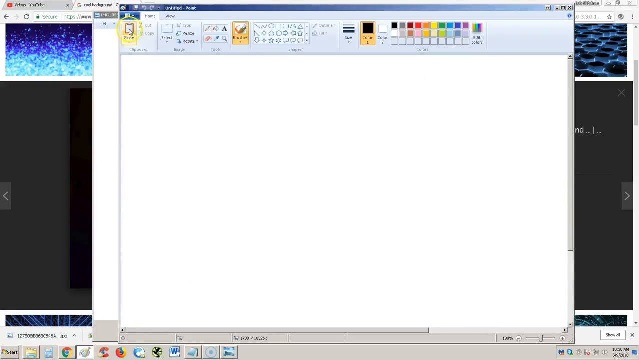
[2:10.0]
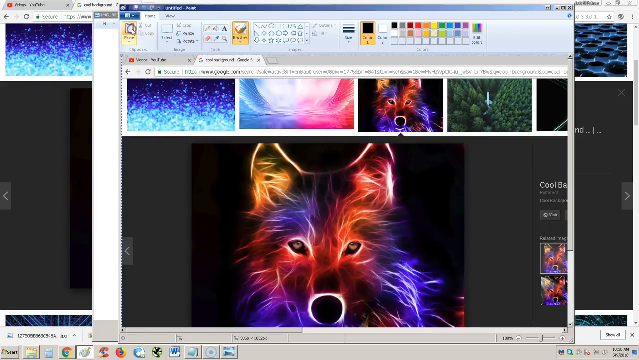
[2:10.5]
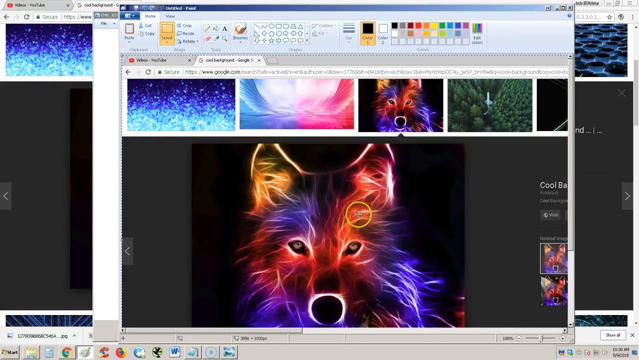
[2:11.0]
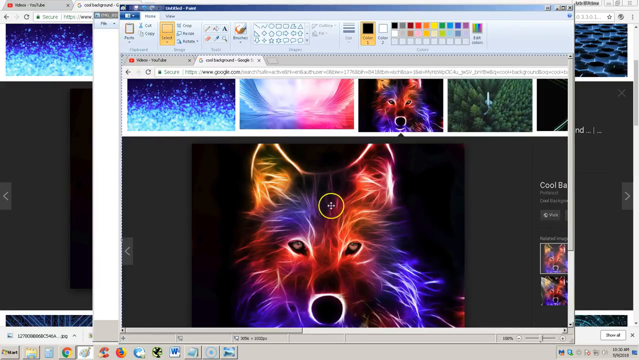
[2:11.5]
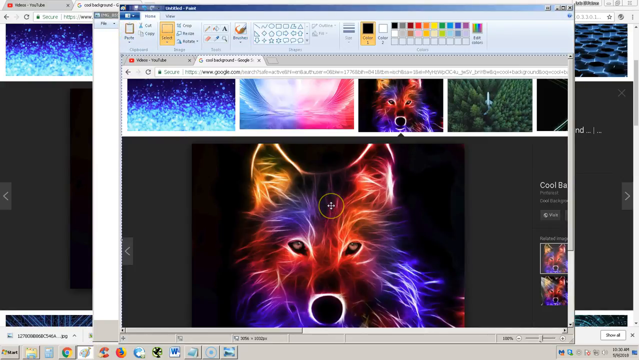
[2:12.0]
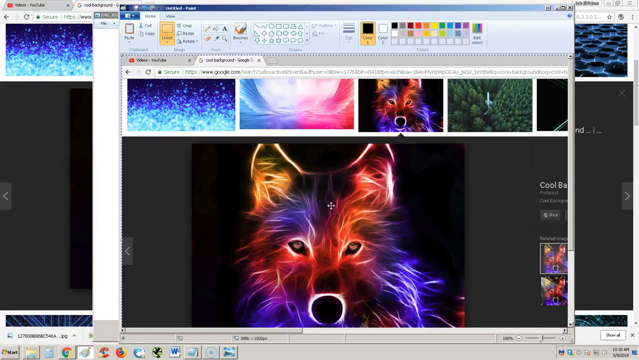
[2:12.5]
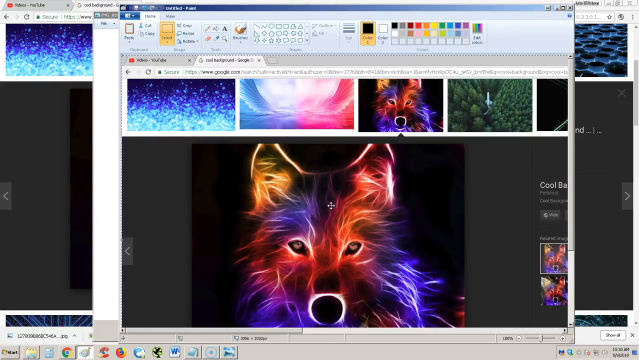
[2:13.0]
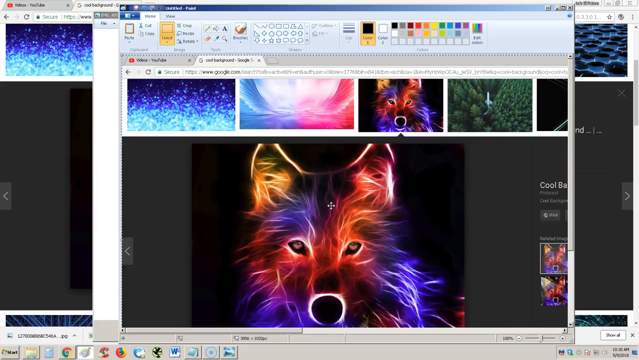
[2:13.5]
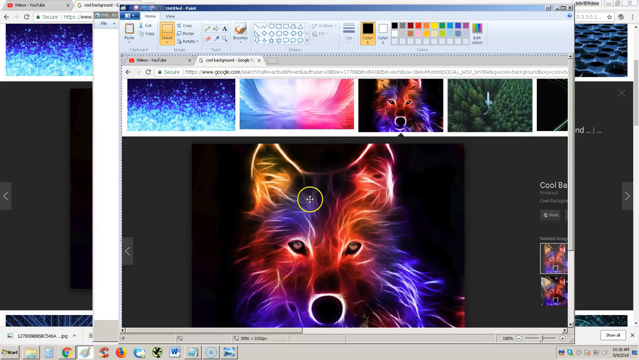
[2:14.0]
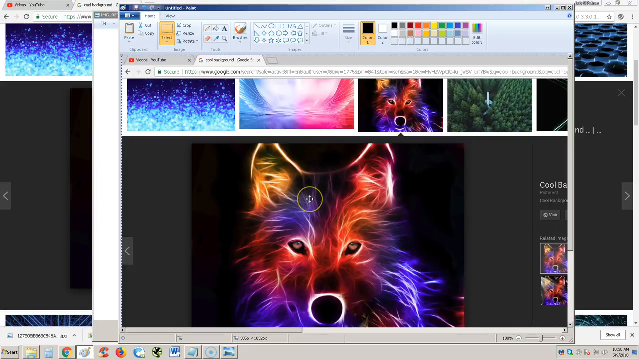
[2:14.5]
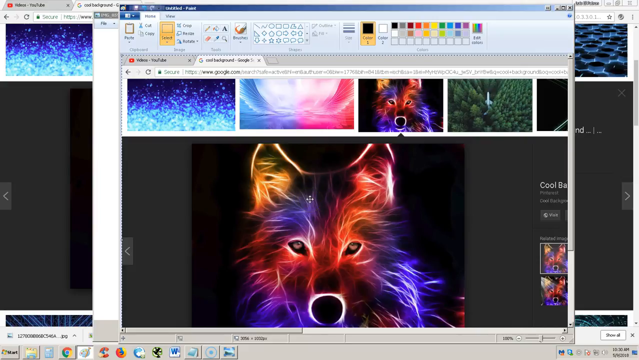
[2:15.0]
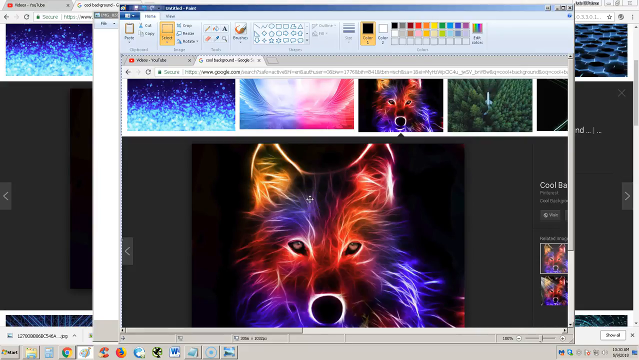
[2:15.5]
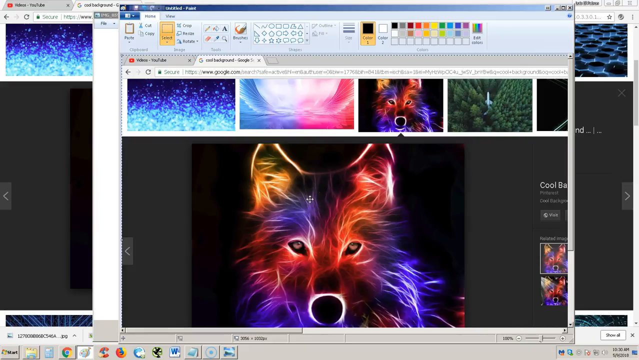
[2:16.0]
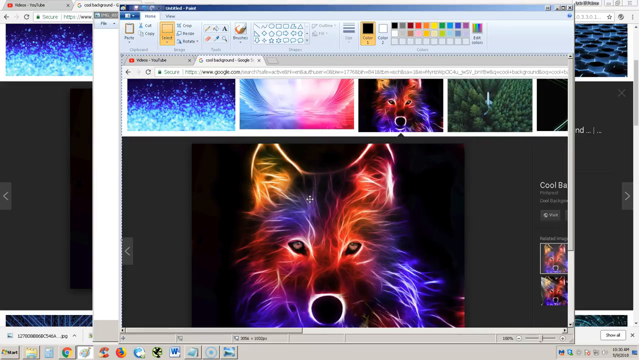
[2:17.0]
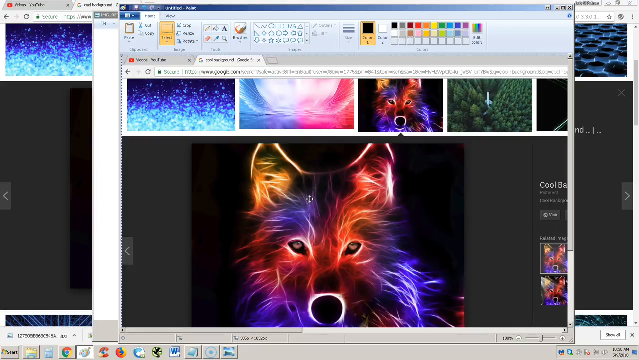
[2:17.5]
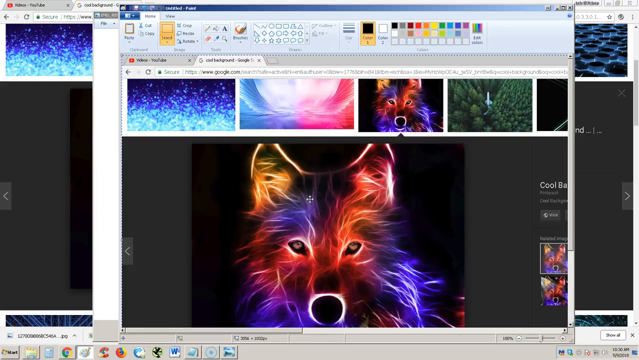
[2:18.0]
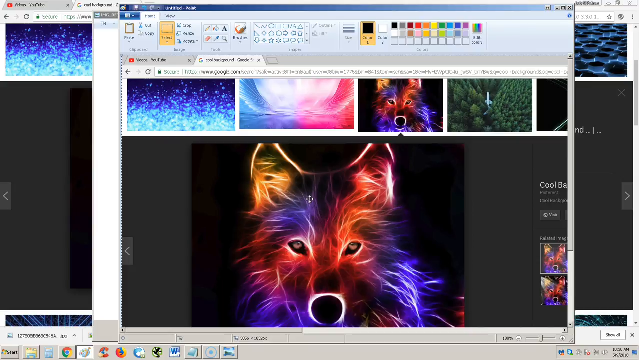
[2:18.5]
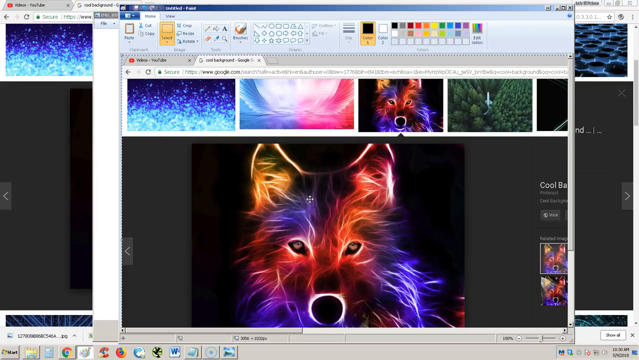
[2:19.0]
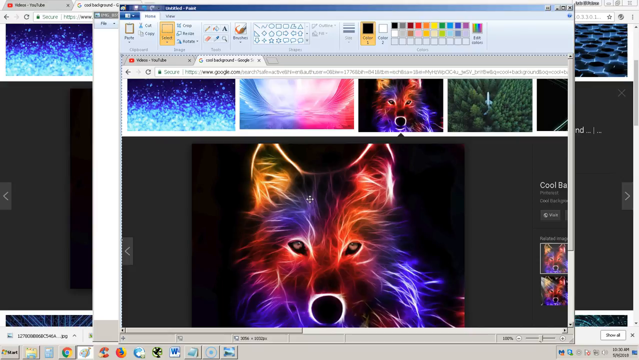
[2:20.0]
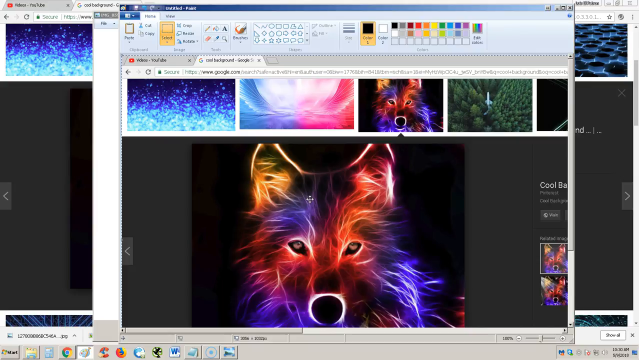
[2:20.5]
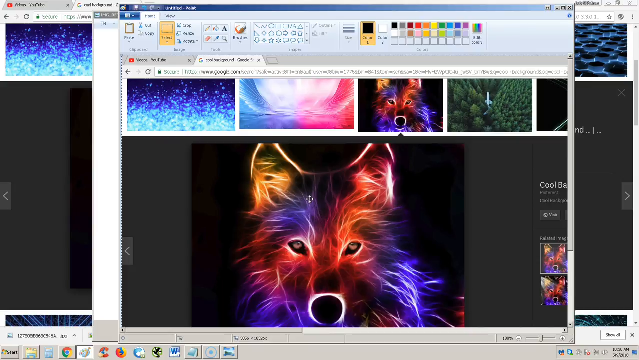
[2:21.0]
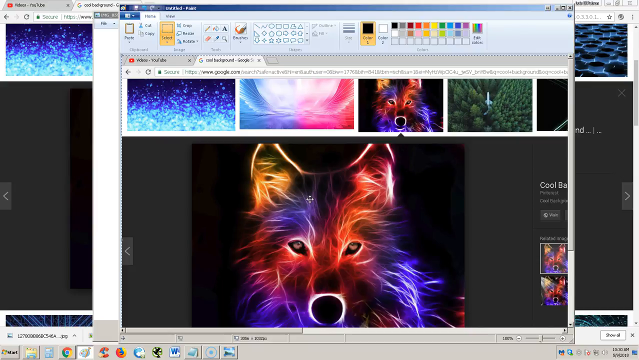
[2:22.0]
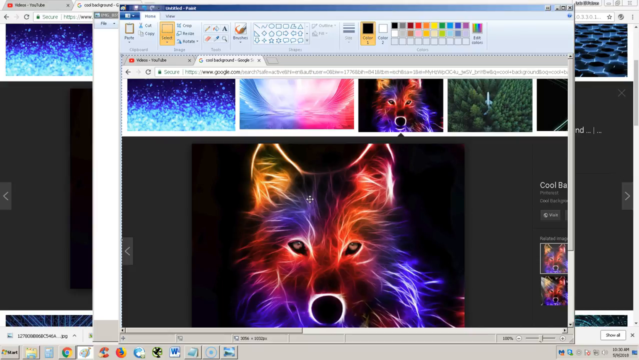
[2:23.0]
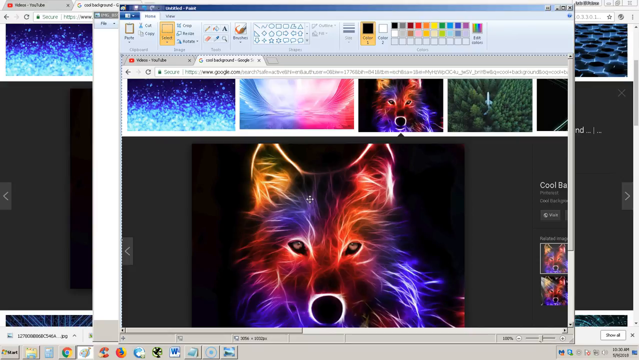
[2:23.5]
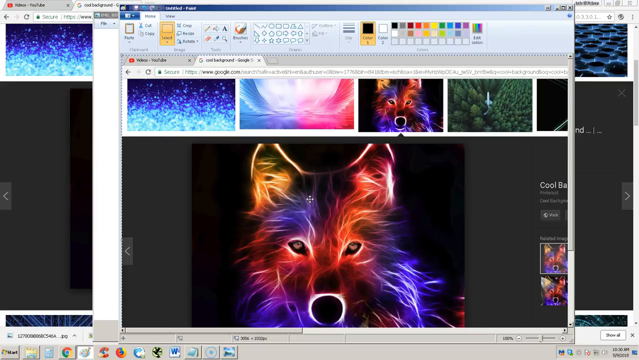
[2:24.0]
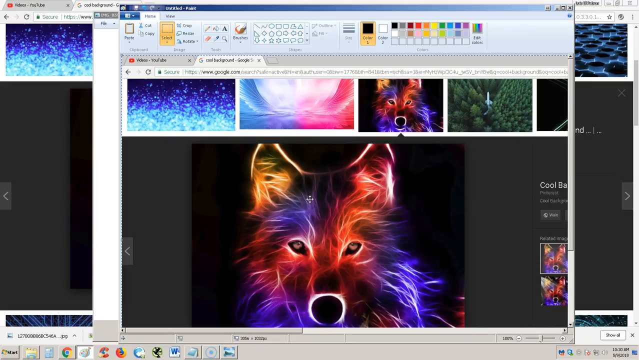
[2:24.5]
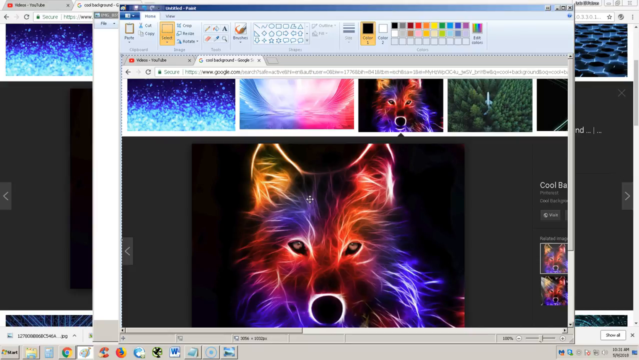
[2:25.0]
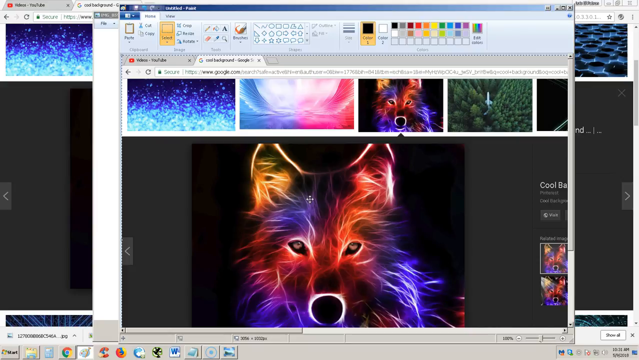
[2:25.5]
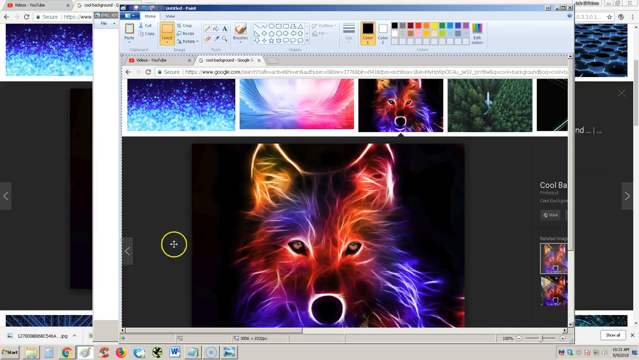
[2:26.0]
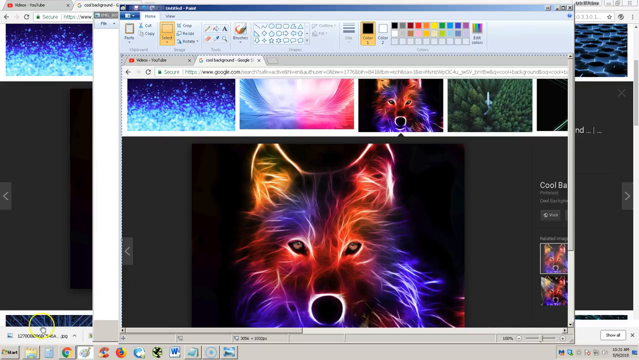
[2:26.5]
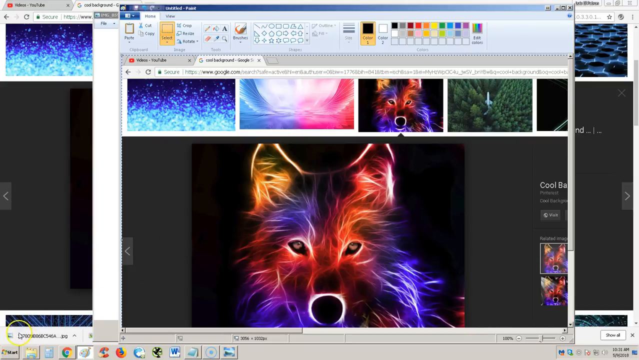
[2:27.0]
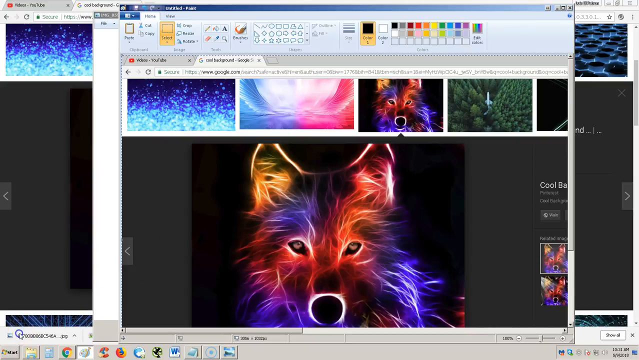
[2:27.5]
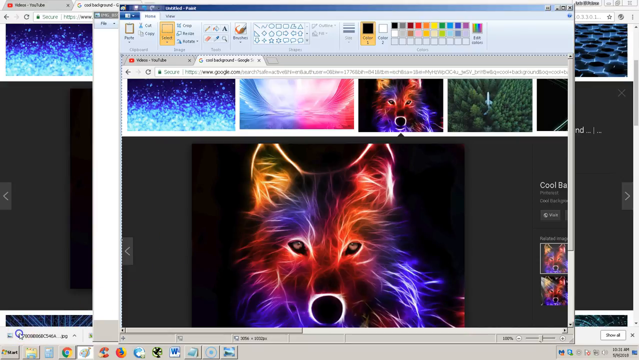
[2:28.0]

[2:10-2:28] The mouse cursor is over the paste clipboard option, highlighted in yellow, and clicks it, and the screenshot of the wolf tab is back on the screen. The cursor is on the wolf's forehead, and this time it is a plus sign; the yellow circle is gone. The plus sign is not a solid line but three dots across with one dot above and one below. The cursor slides to the lower left-hand corner, and as it does the yellow circle appears again; something is clicked, and then the cursor slides to the corner and pauses without doing anything. In the Paint software, several things are yellow, one looking like a square, with a word below it highlighted in orange. The color black in the middle of the function menu is highlighted in orange as well.